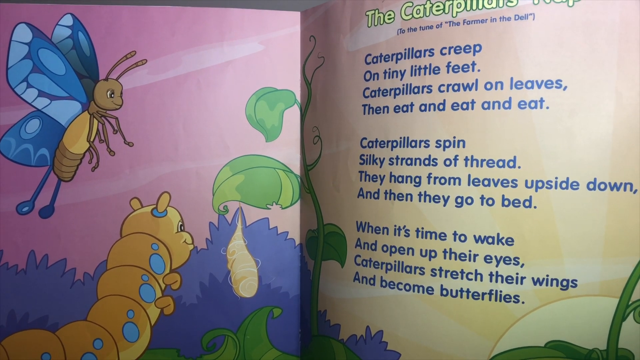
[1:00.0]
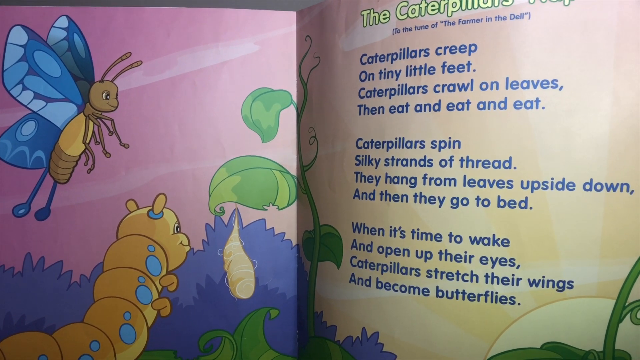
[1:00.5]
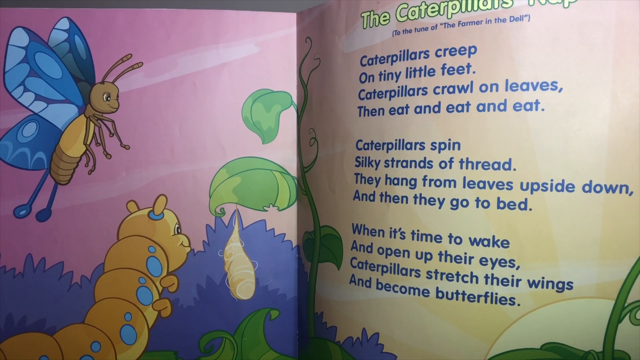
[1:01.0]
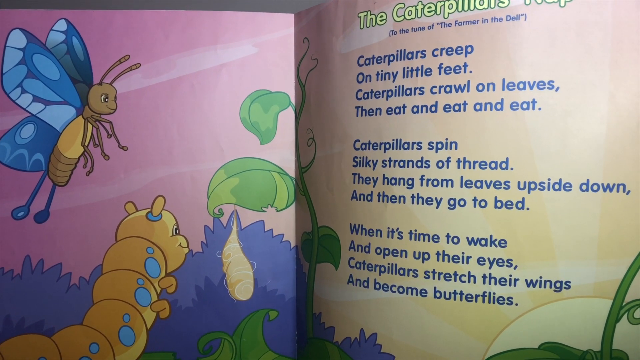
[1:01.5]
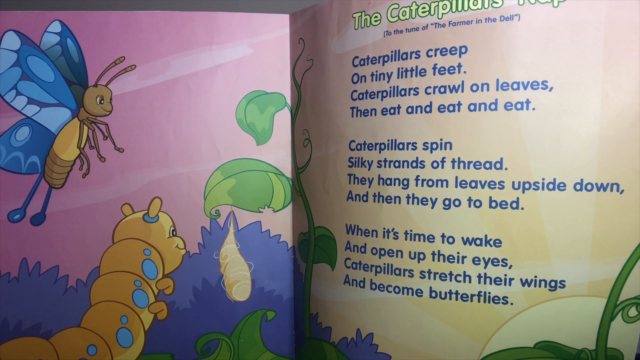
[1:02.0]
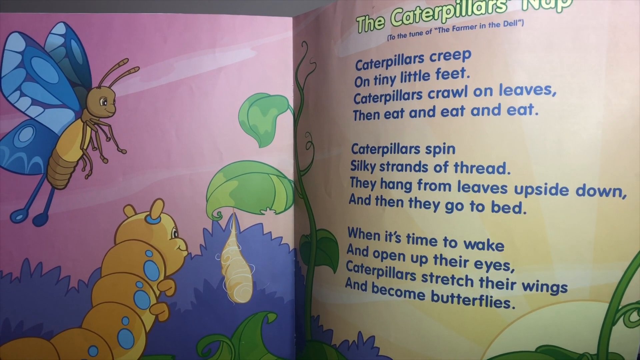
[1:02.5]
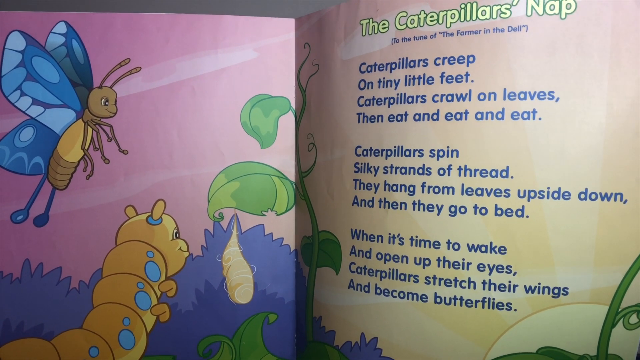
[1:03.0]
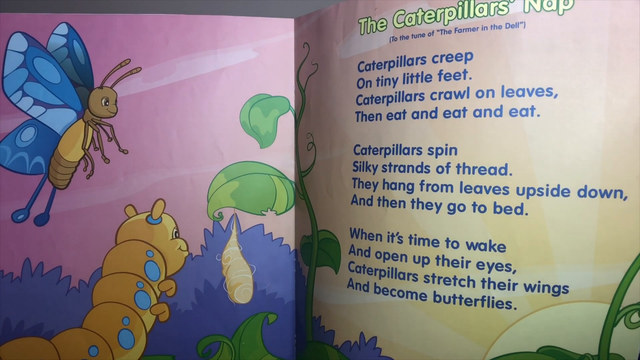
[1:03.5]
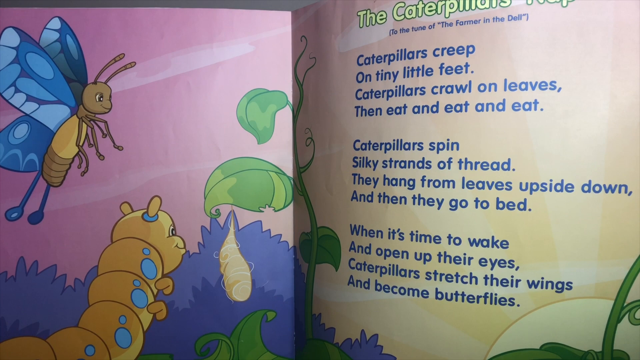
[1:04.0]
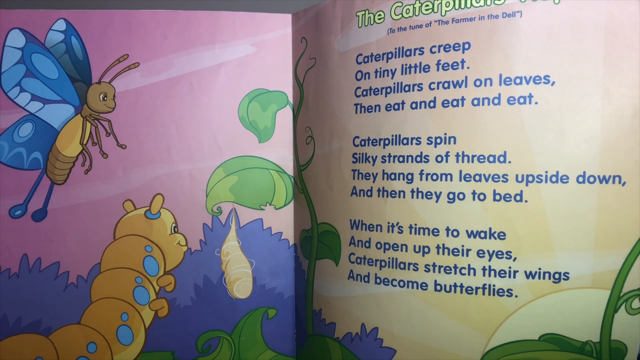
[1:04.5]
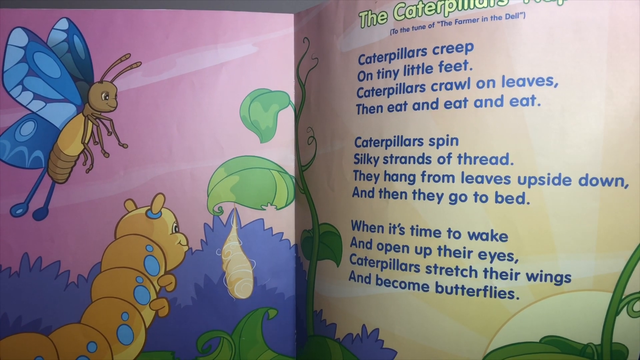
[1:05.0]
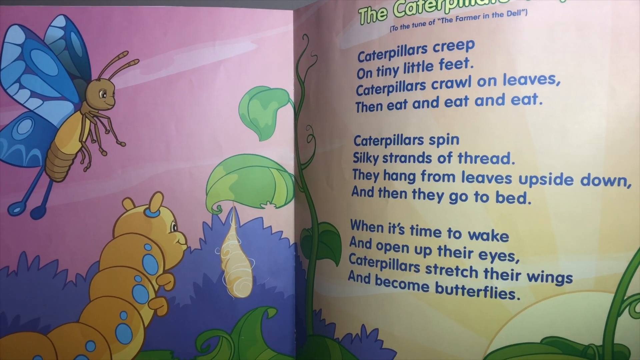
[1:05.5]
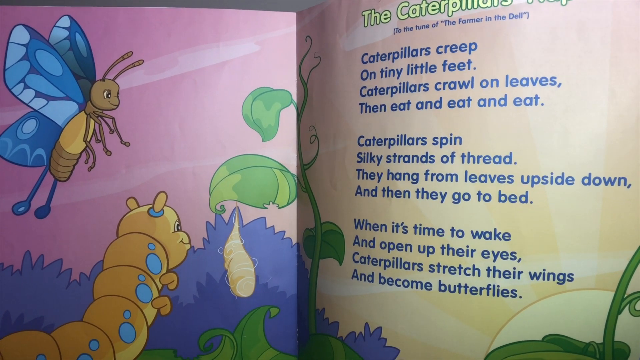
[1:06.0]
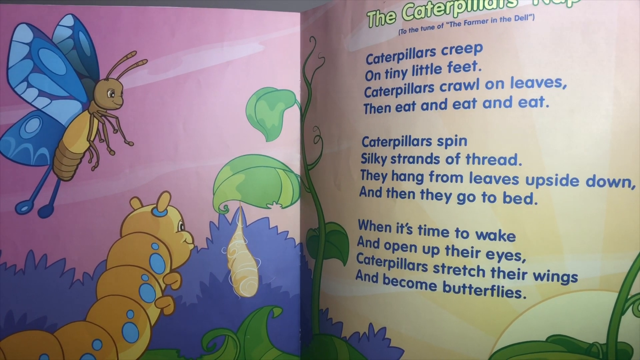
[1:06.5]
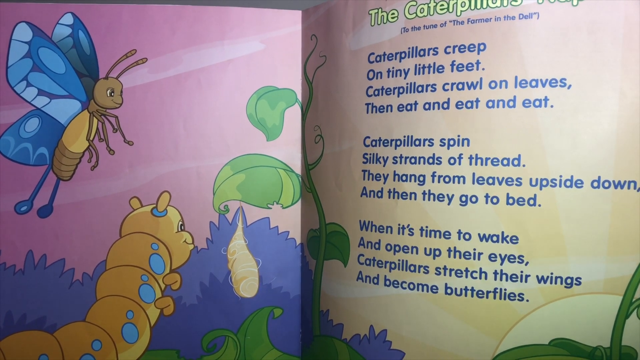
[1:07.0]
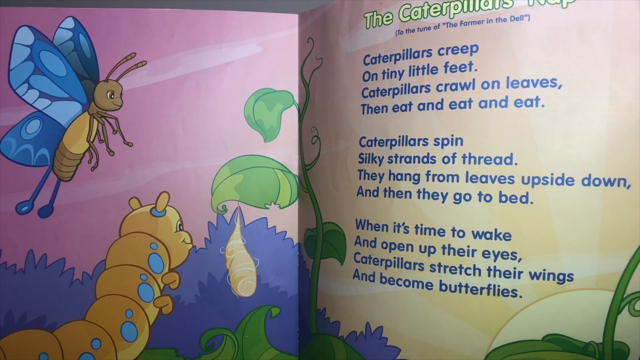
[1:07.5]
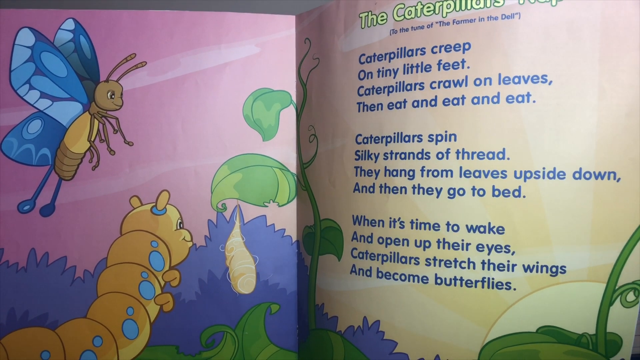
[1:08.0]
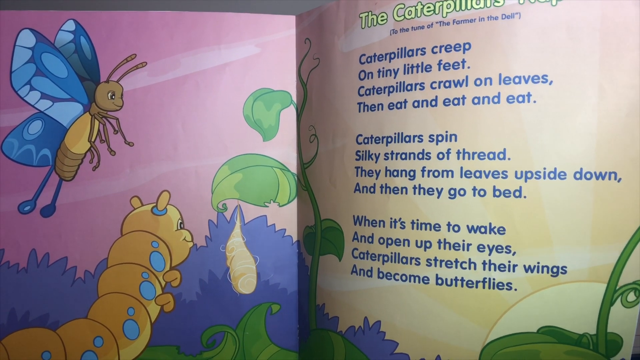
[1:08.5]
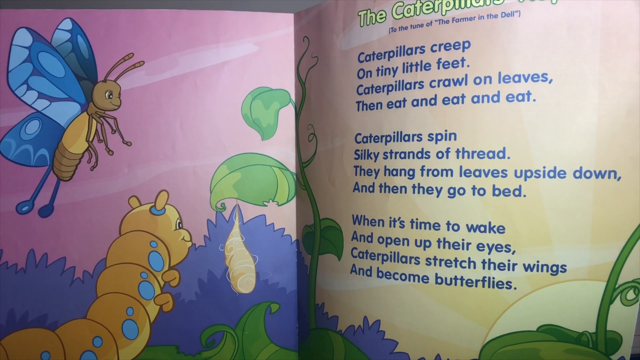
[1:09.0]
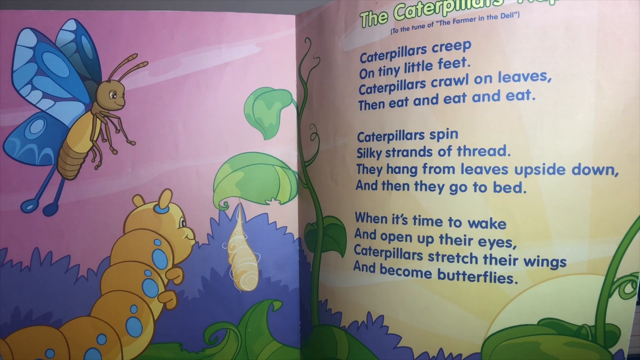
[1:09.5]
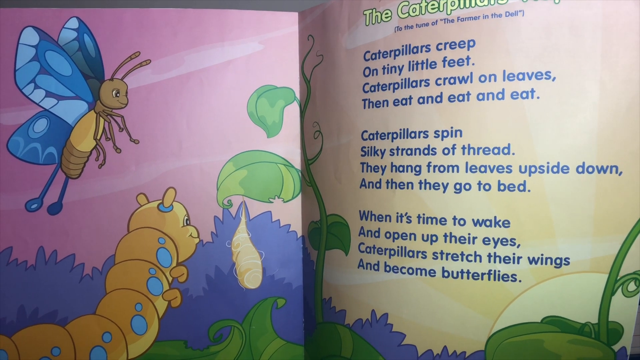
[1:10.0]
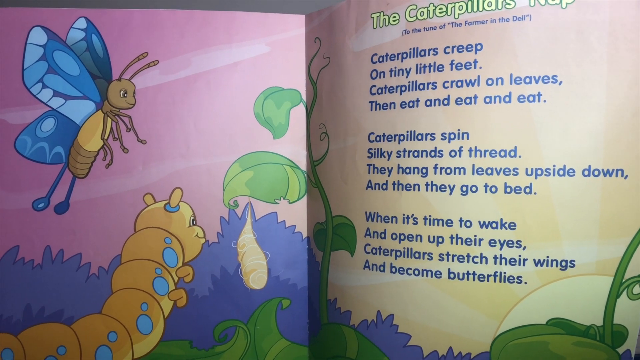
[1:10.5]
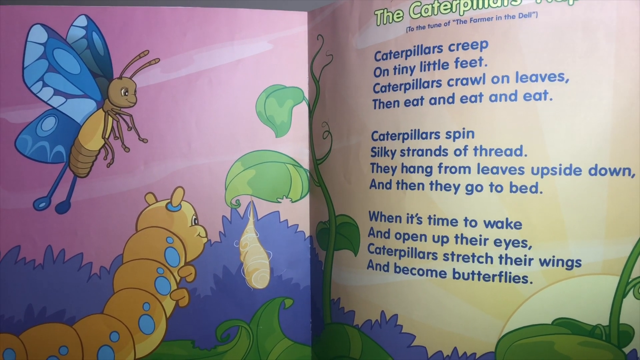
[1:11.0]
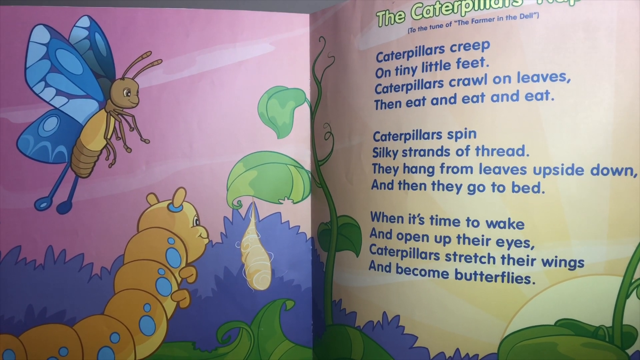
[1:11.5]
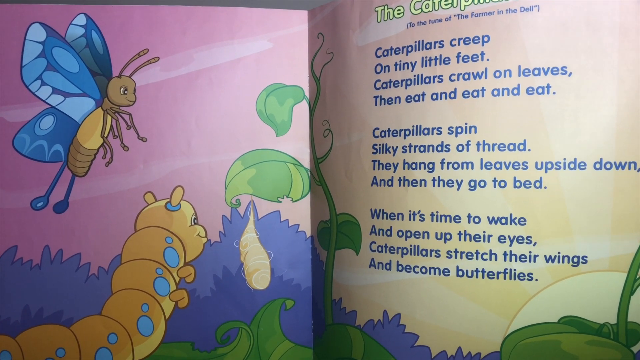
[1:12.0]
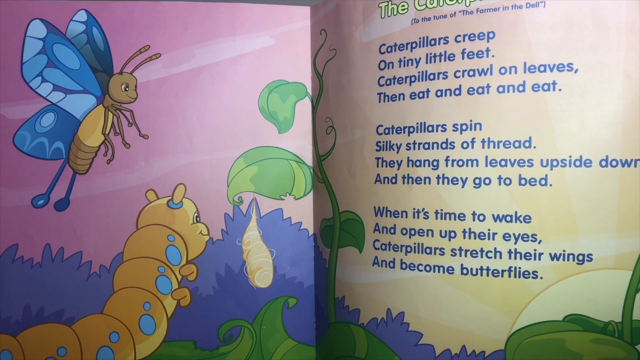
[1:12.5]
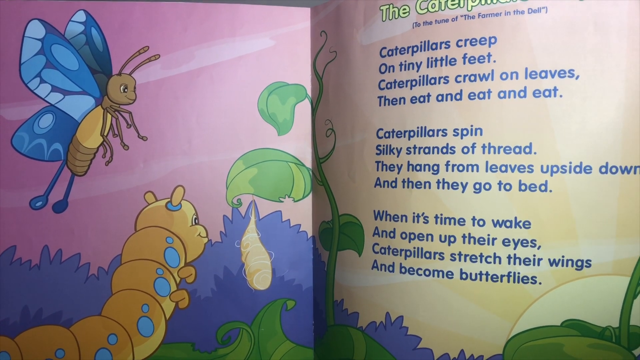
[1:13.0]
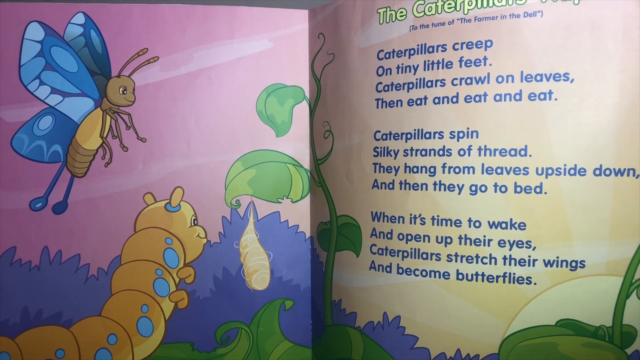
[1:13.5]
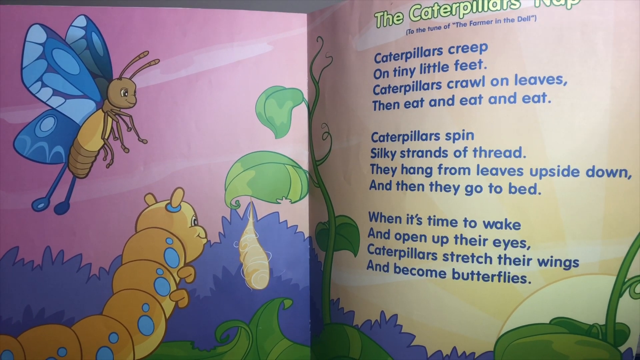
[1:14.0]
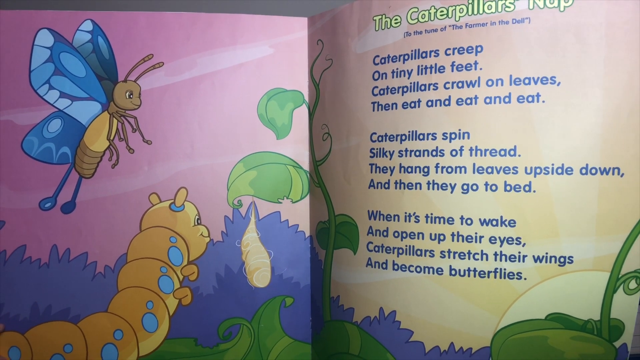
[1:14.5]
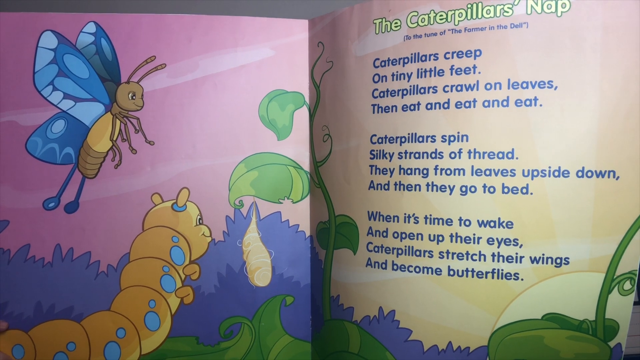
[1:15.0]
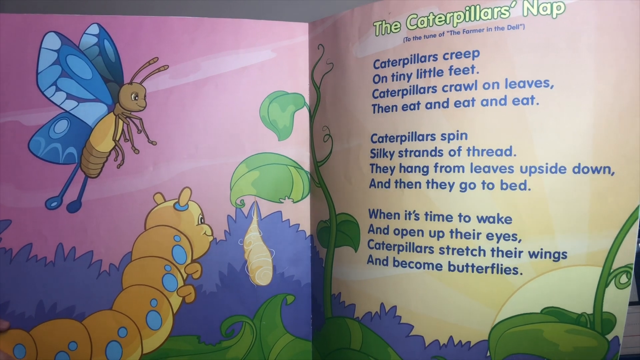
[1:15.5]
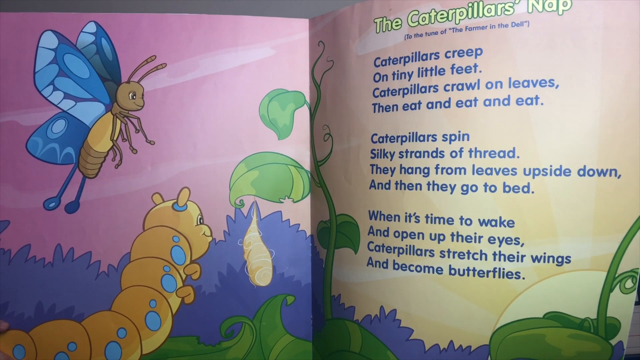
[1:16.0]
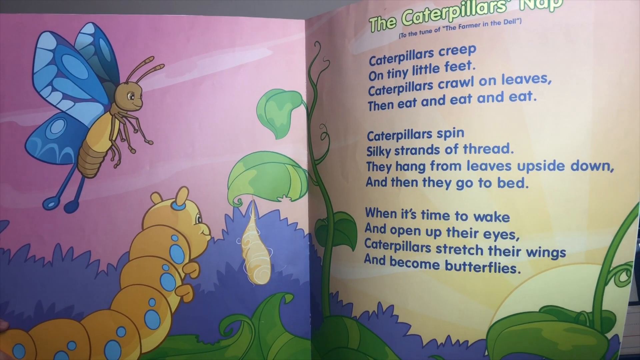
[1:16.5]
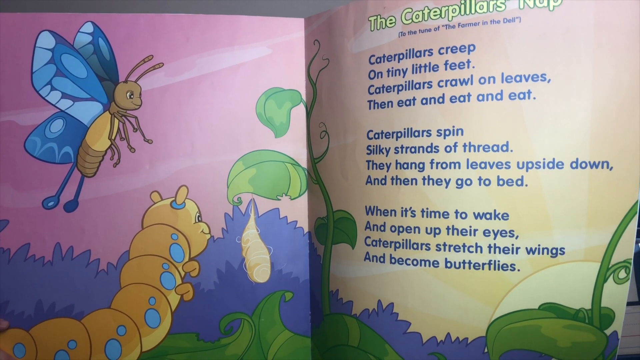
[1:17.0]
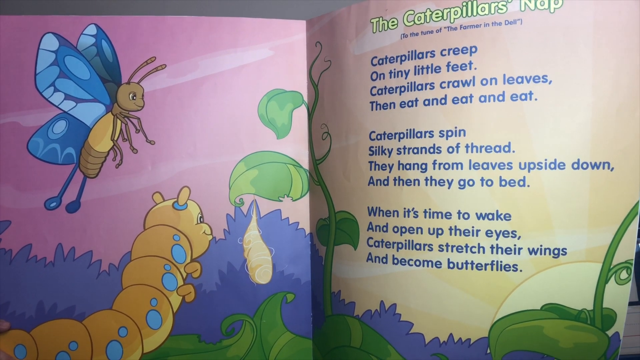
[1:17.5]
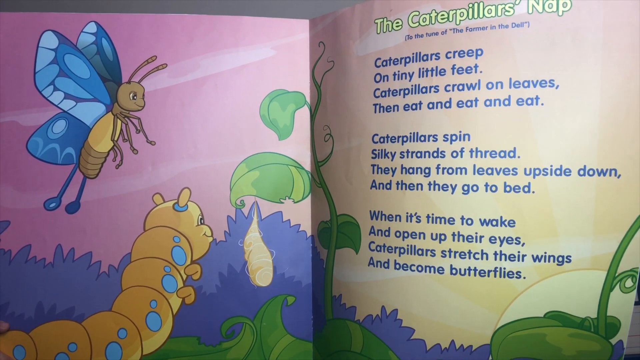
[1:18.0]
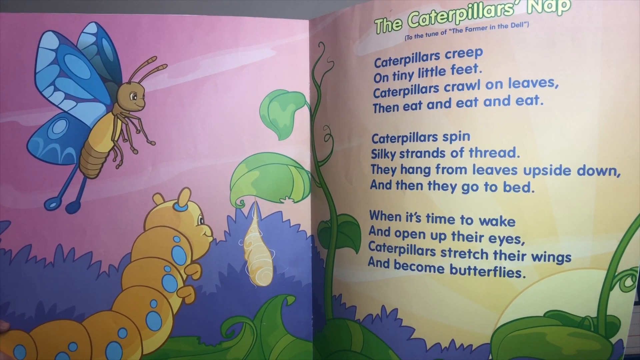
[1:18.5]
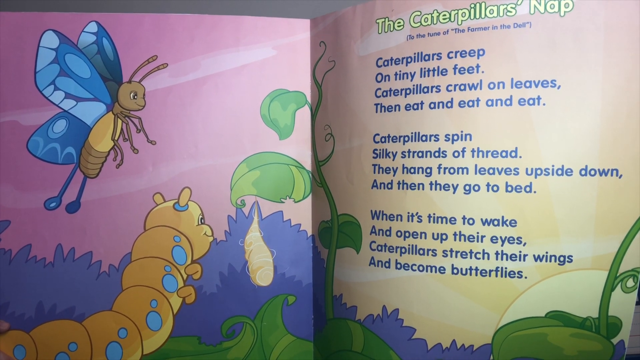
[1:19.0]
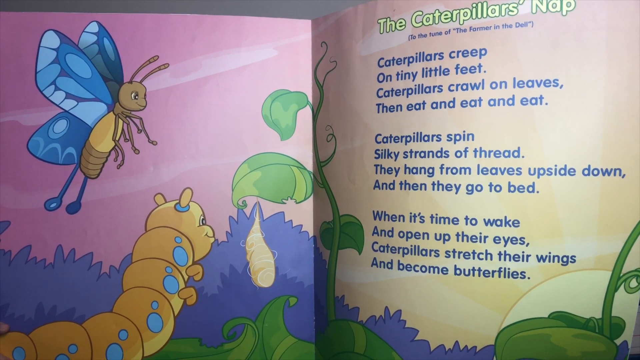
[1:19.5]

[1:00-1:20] The same page remains on screen, presumably while she reads it. The text reads: "Caterpillars creep on tiny little feet. Caterpillars crawl on leaves and eat and eat and eat. Caterpillars spin silky strands of thread. They hang from leaves upside down and then they go to bed. When it's time to wake and open up their eyes, caterpillars stretch their wings and become butterflies." The caterpillar is yellow with a blue spot, and the butterfly has a yellow body and blue wings. The chrysalis is gold and wispy.